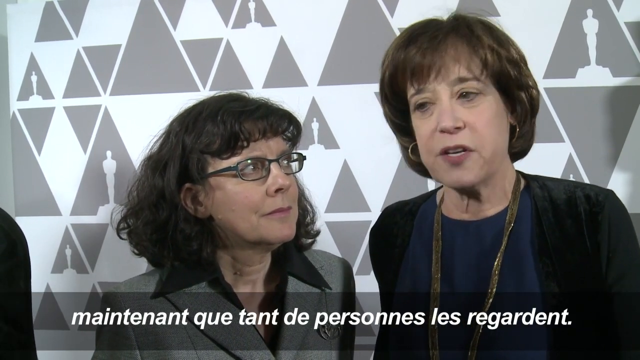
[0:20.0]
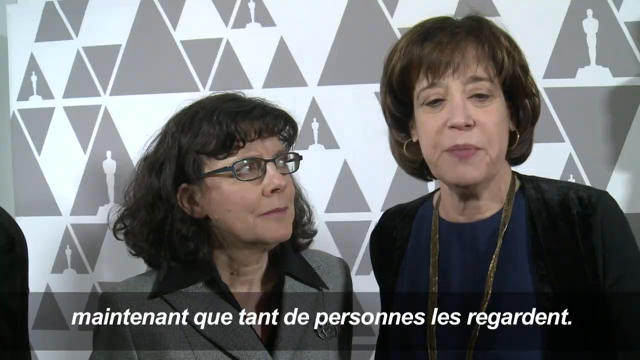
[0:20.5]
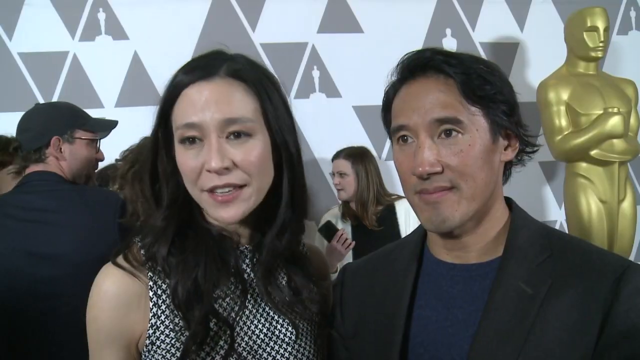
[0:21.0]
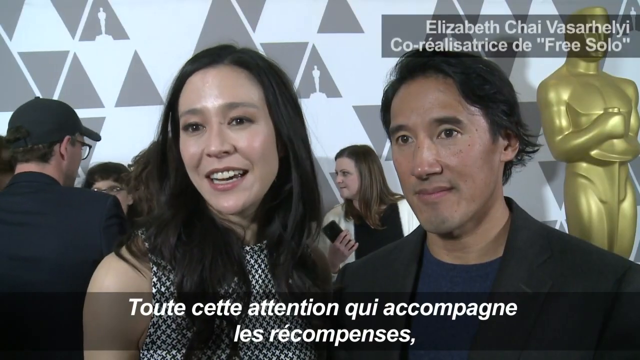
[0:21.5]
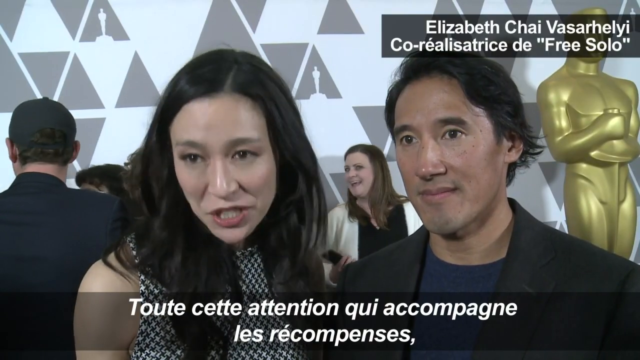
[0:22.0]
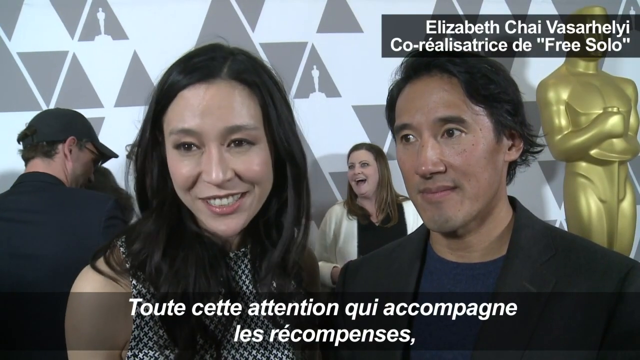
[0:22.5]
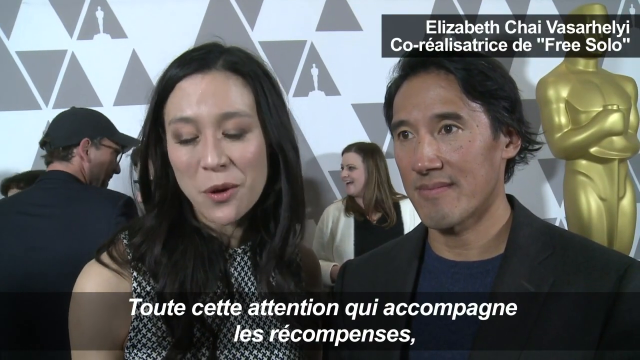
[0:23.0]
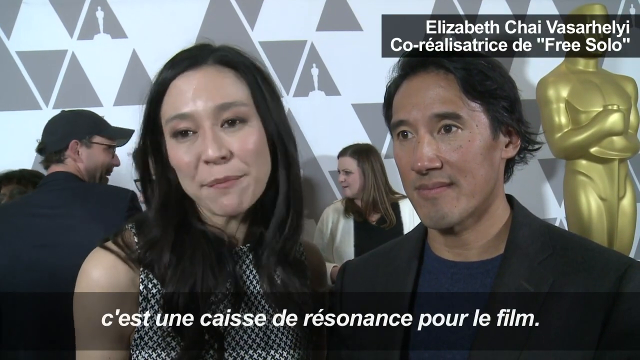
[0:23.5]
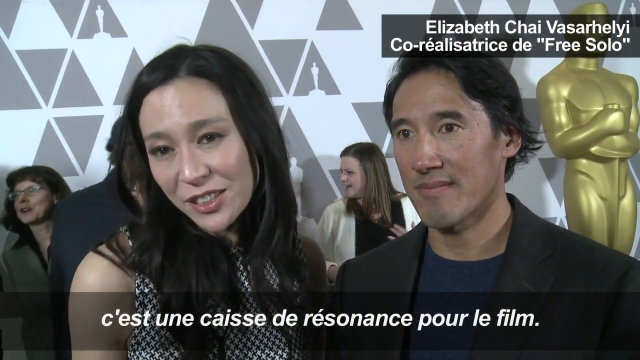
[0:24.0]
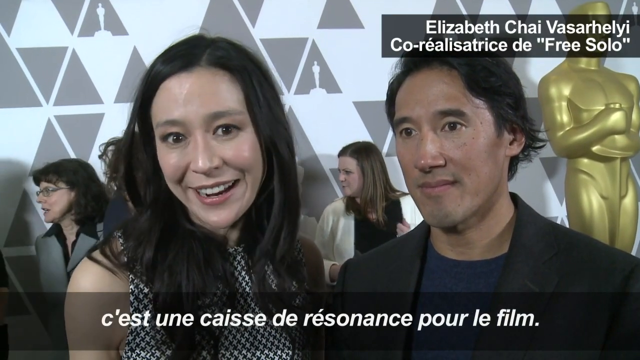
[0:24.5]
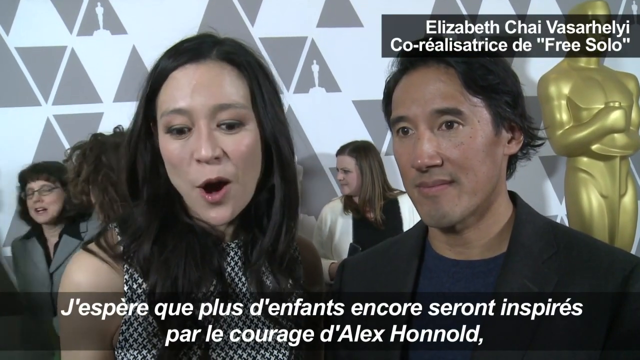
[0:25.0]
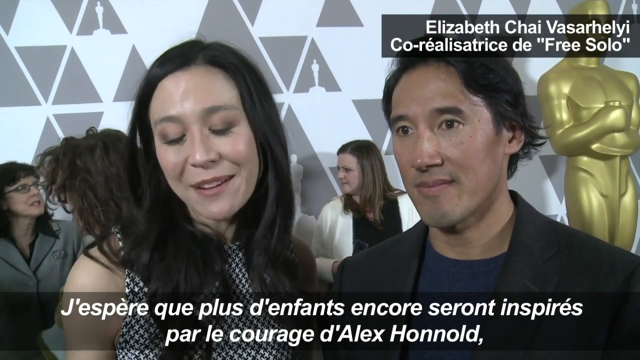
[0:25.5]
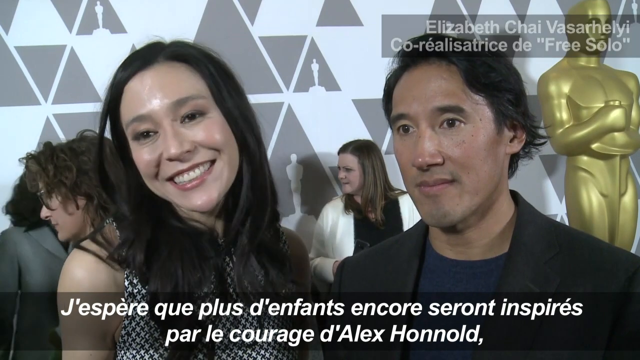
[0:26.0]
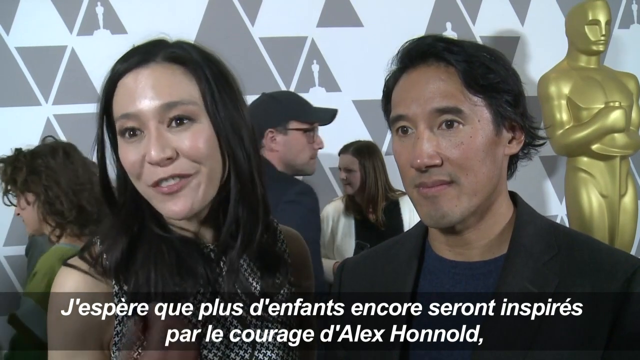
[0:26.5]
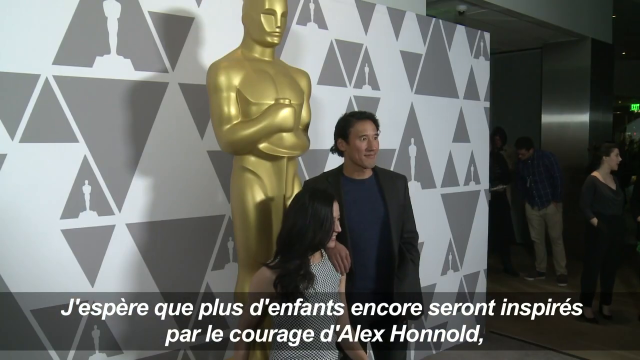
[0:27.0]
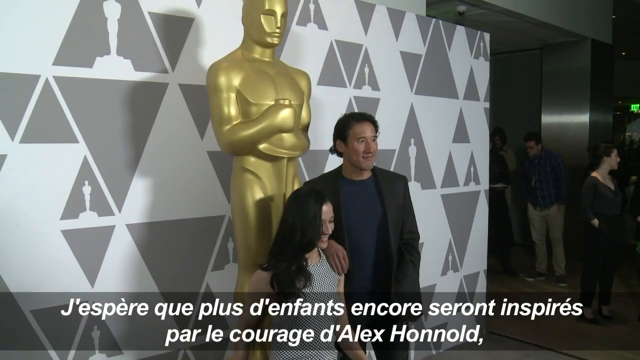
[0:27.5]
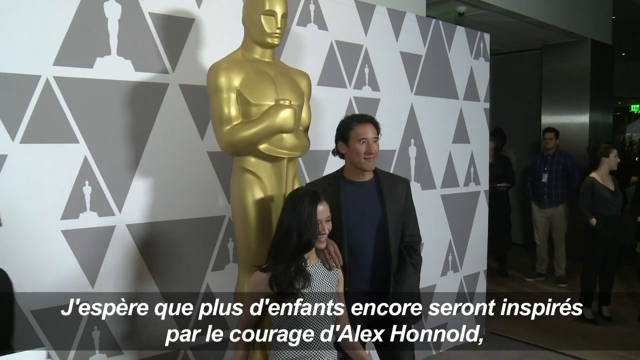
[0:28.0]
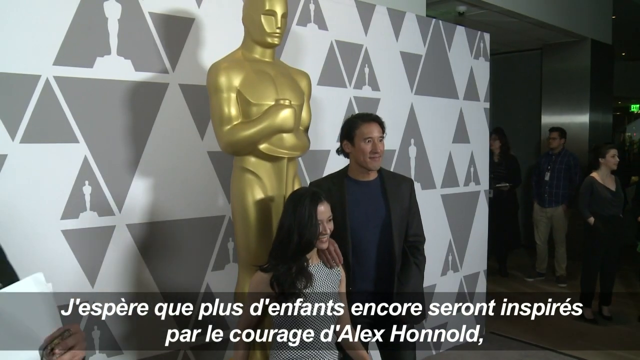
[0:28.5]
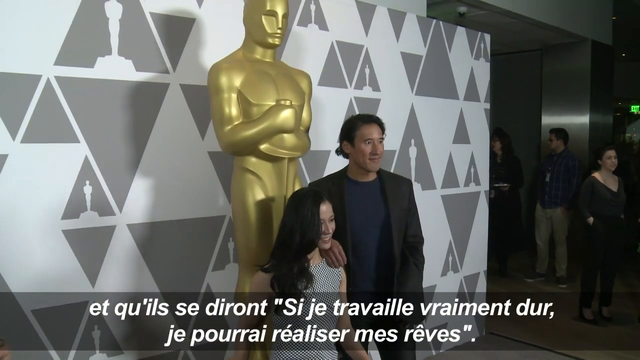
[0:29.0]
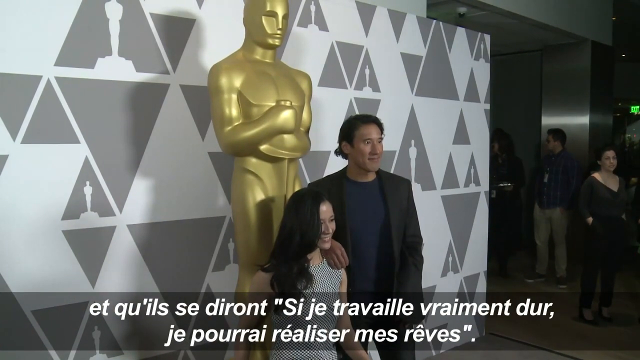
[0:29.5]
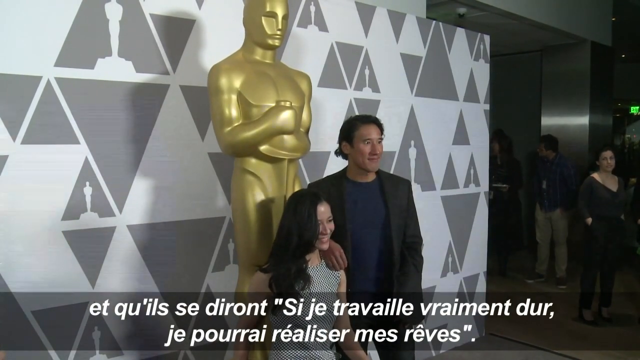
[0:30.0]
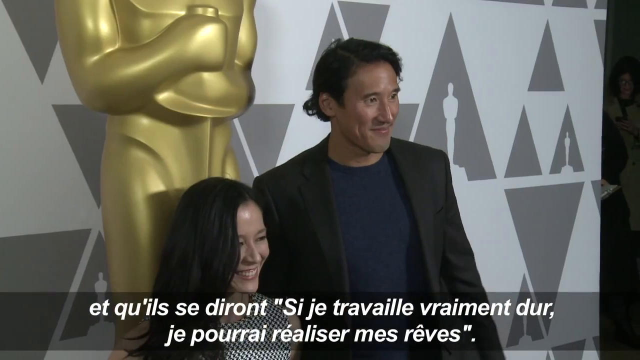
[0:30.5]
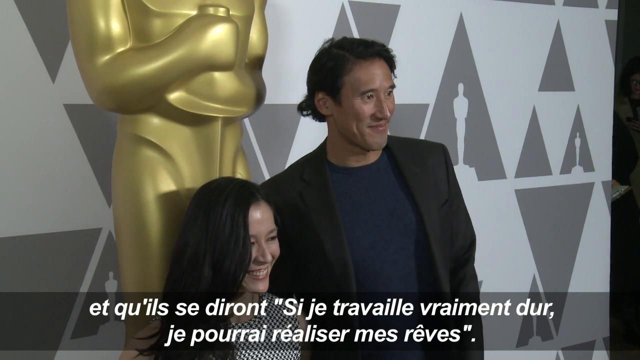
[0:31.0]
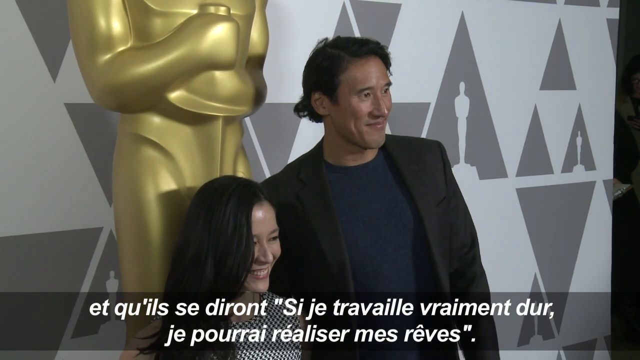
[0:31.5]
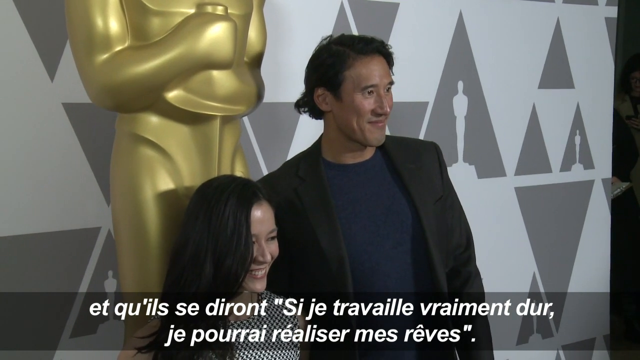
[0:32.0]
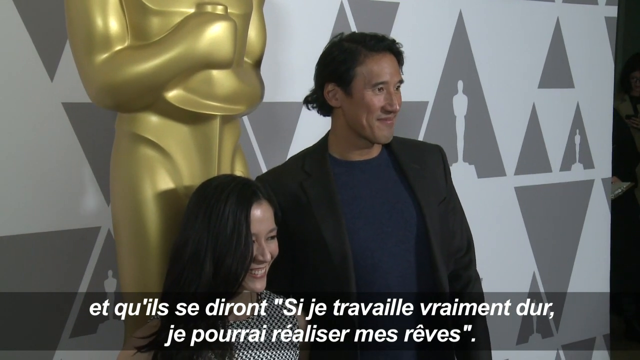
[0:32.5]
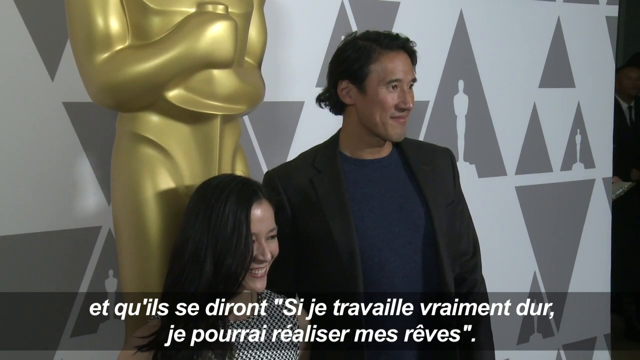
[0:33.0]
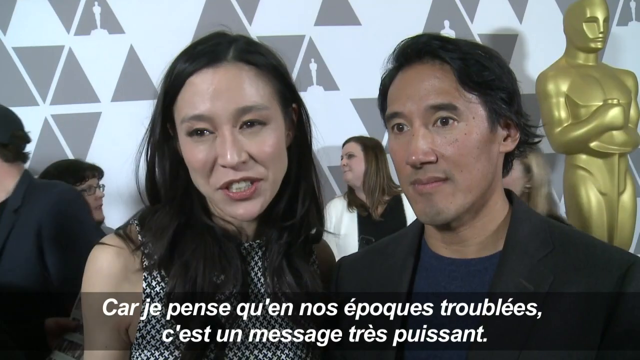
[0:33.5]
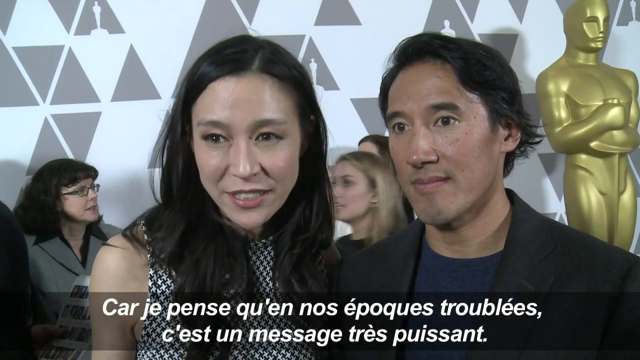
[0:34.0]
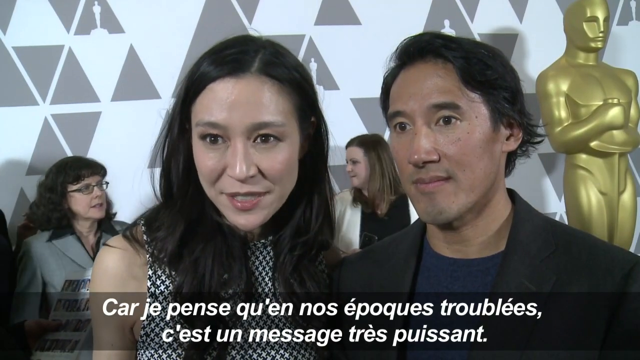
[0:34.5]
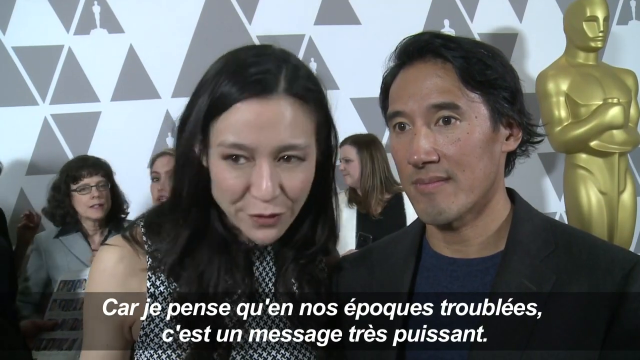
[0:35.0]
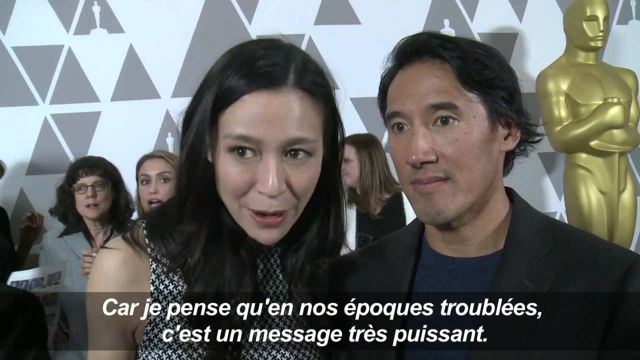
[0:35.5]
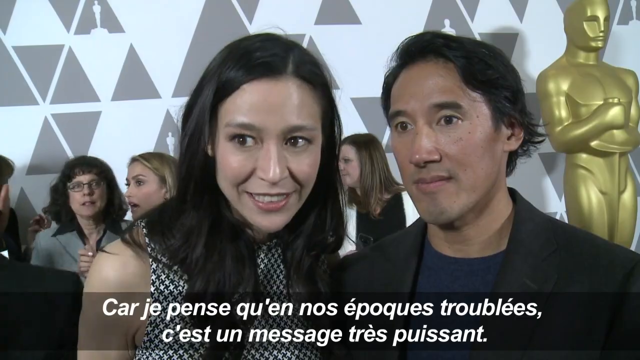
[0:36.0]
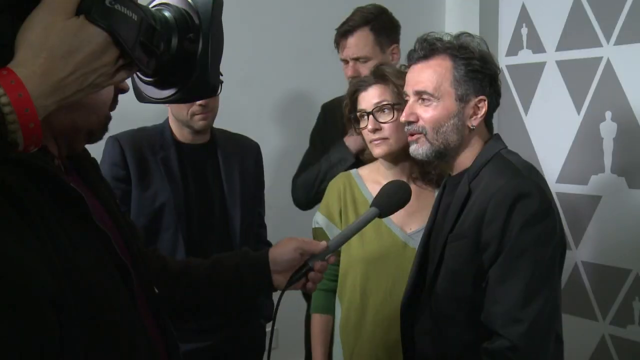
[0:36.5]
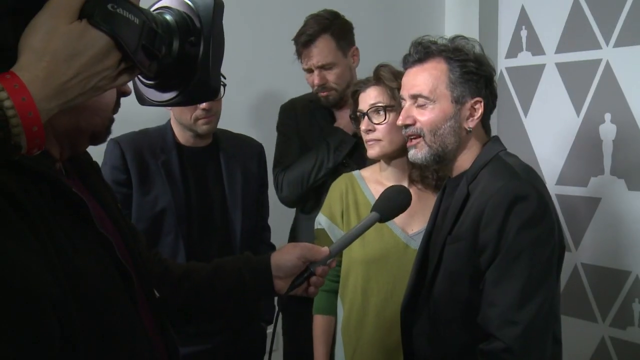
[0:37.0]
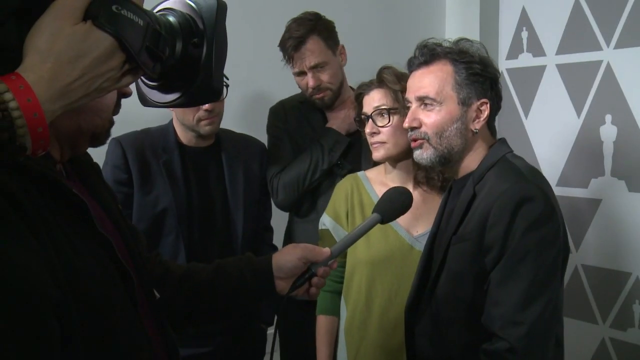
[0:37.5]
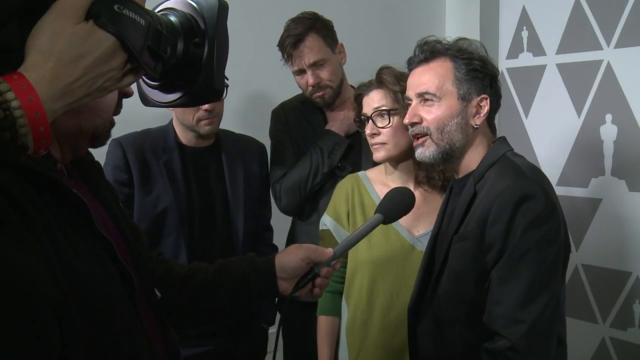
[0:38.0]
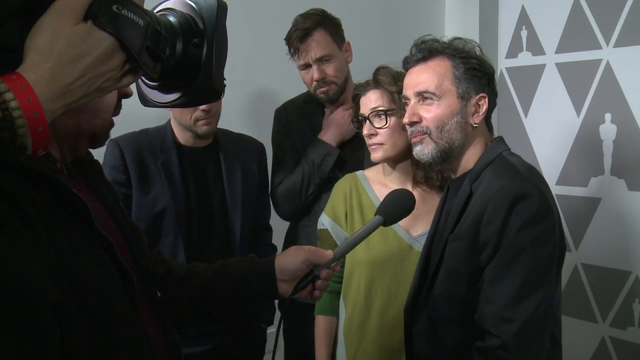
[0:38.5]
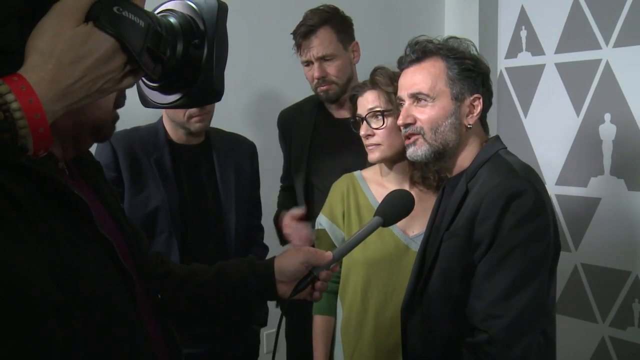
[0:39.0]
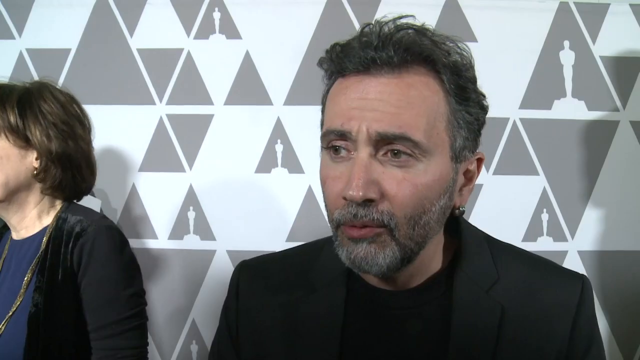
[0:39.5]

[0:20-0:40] Betsy West and Julie Cohen briefly finish answering a question, and then the view switches to a camera angle interviewing Elizabeth Chai Vasarhali and Jimmy Chin. Her name appears in the top right corner along with some other words, mainly in French, and French subtitles run along the bottom. Elizabeth seems to be answering all the questions while Jimmy Chin just stands there and smiles. A different camera angle shows Elizabeth and Jimmy getting their photo taken, and eventually the view returns to the two of them as Elizabeth continues answering questions, with various subtitles at the bottom, apparently in French. The scene then changes to Talal Derki answering some questions while standing alongside another attendee, and the camera finally centers in on him.